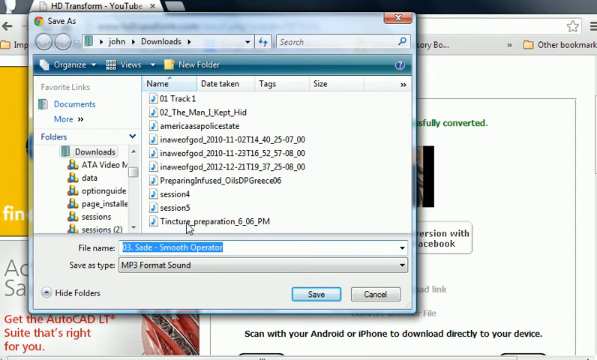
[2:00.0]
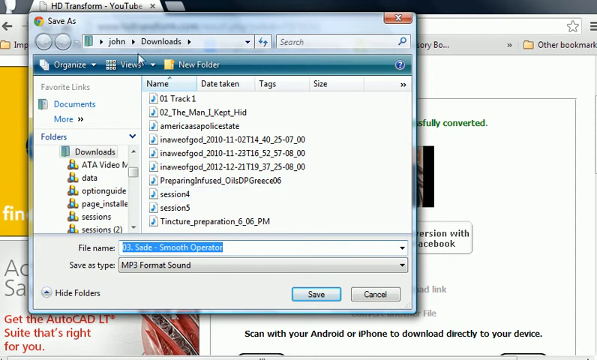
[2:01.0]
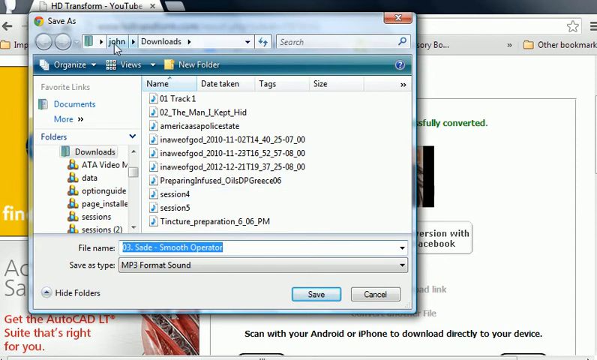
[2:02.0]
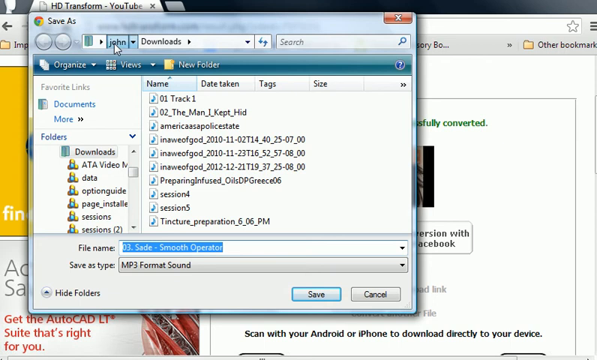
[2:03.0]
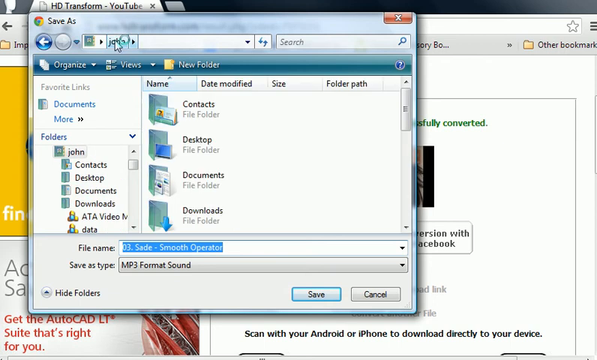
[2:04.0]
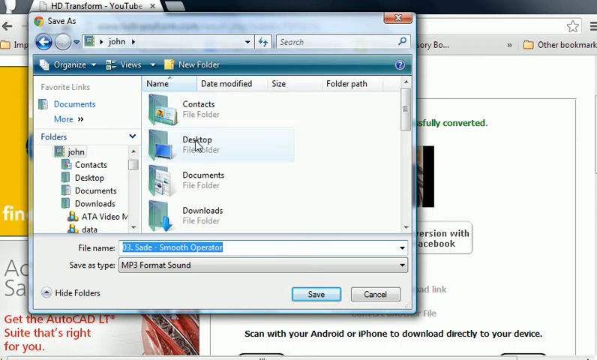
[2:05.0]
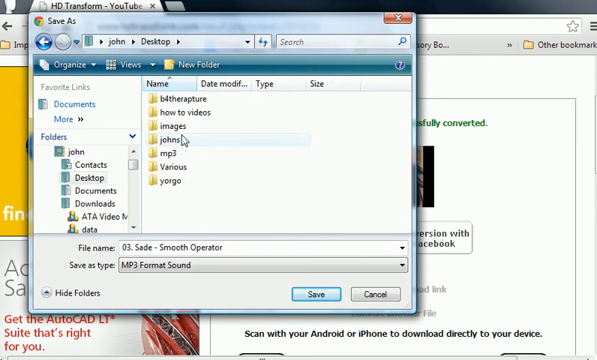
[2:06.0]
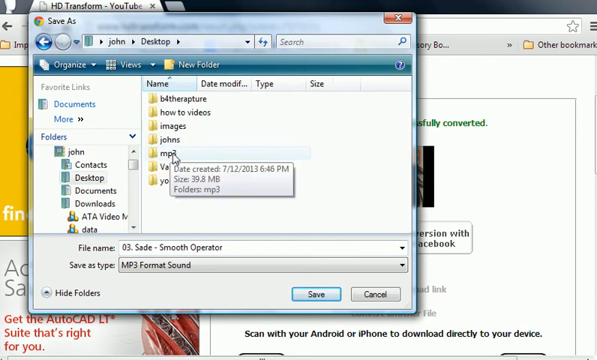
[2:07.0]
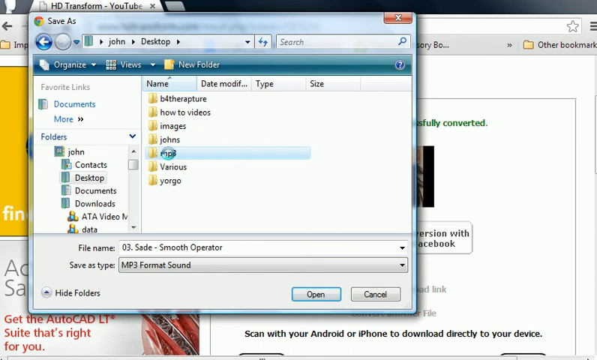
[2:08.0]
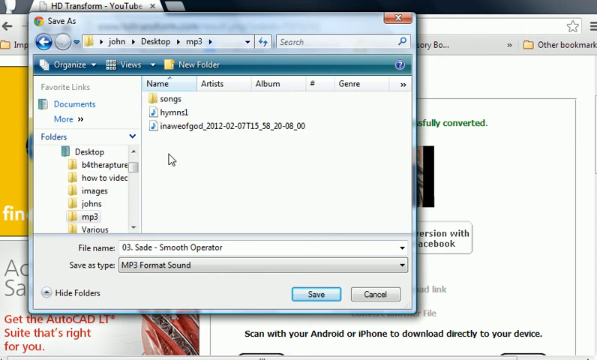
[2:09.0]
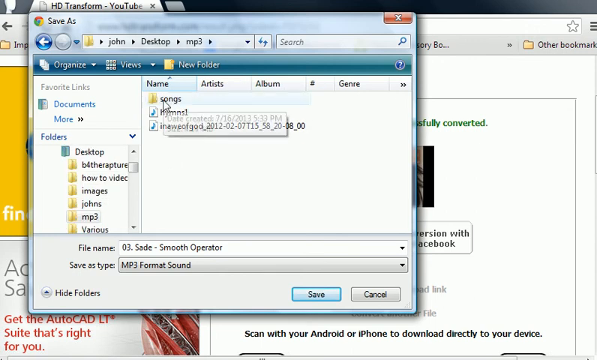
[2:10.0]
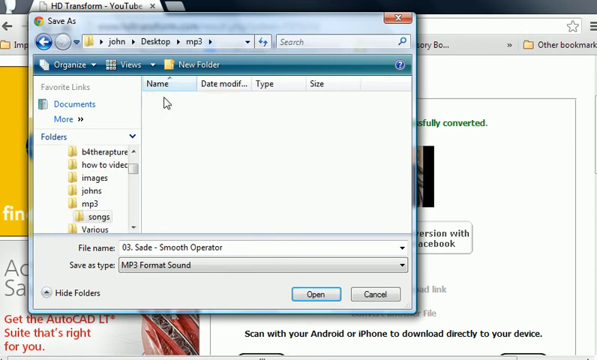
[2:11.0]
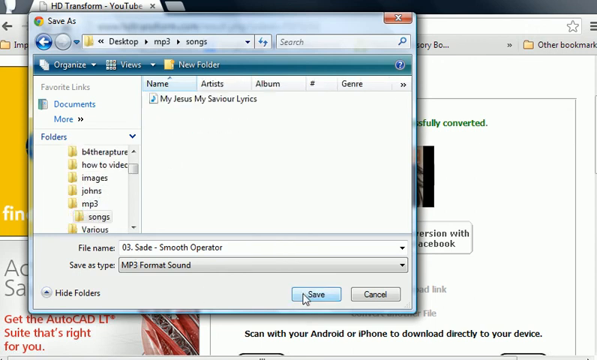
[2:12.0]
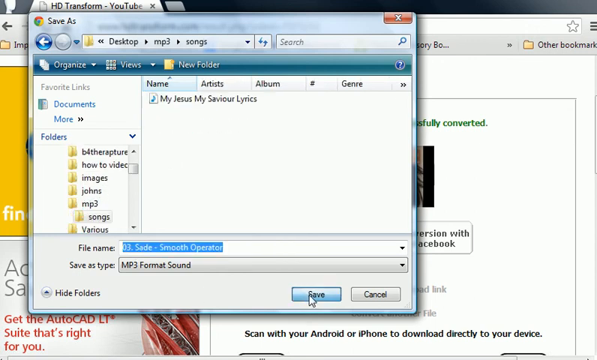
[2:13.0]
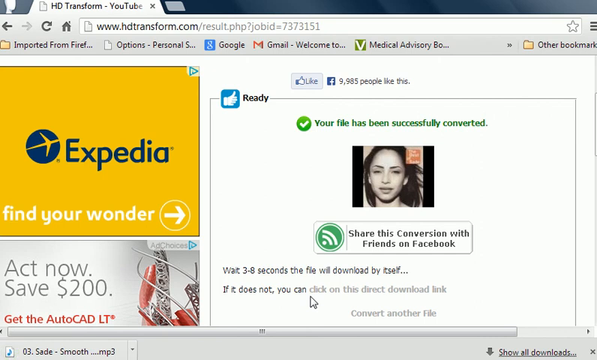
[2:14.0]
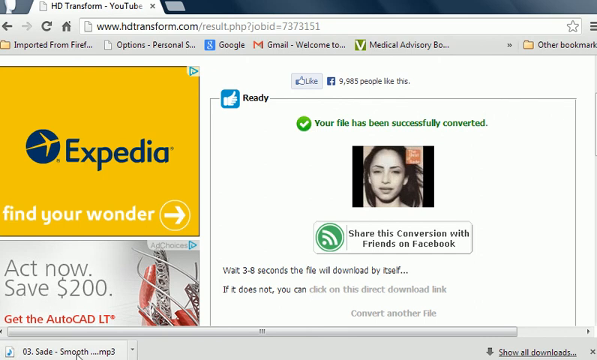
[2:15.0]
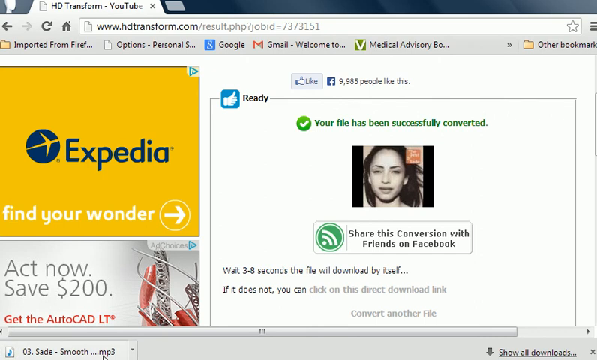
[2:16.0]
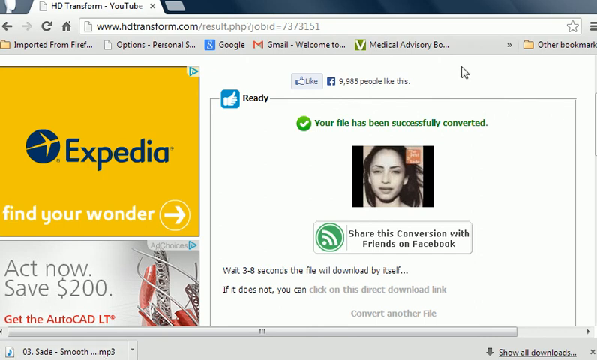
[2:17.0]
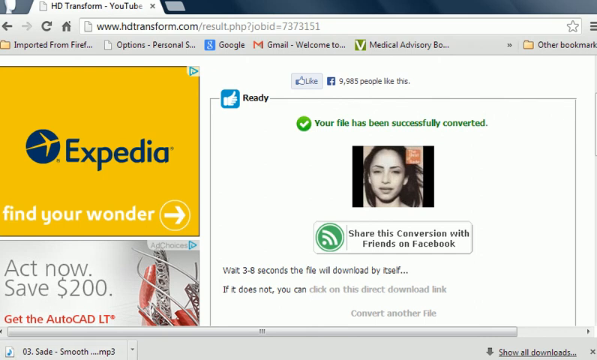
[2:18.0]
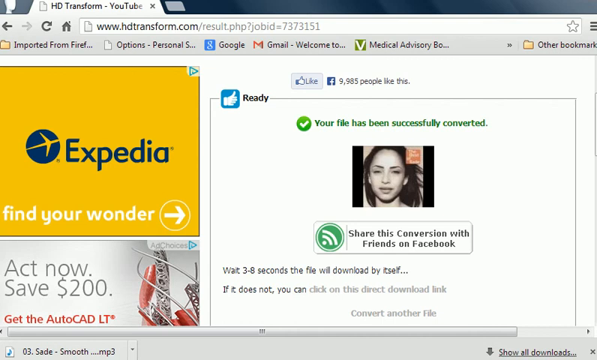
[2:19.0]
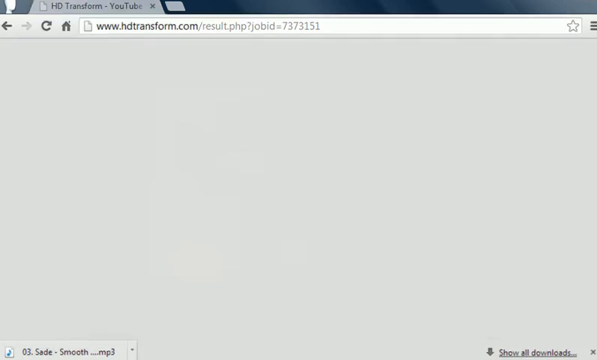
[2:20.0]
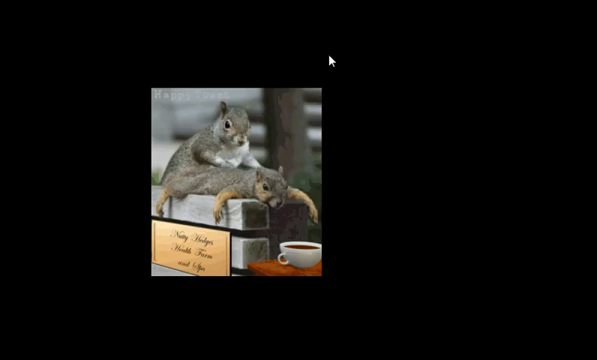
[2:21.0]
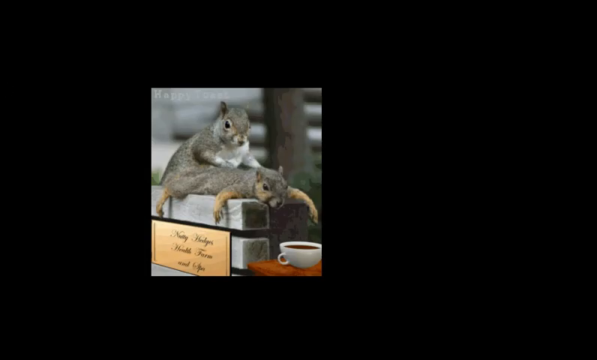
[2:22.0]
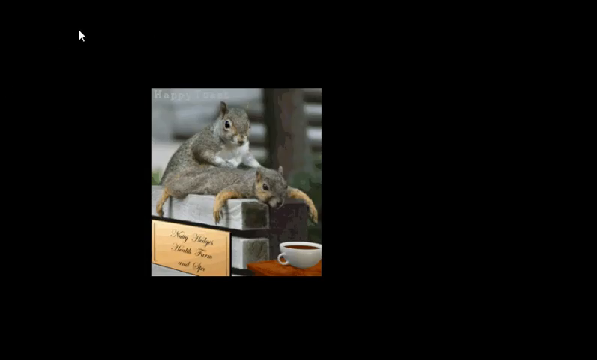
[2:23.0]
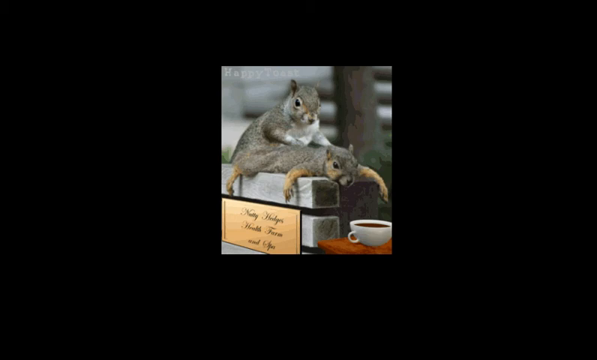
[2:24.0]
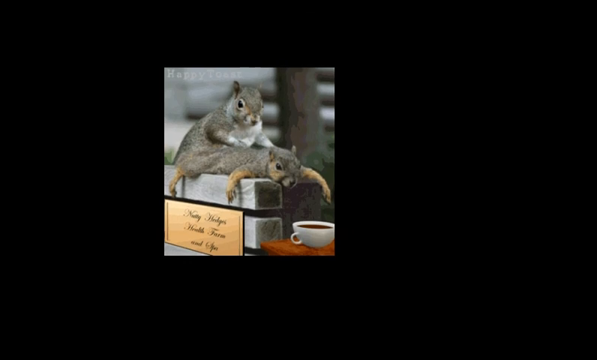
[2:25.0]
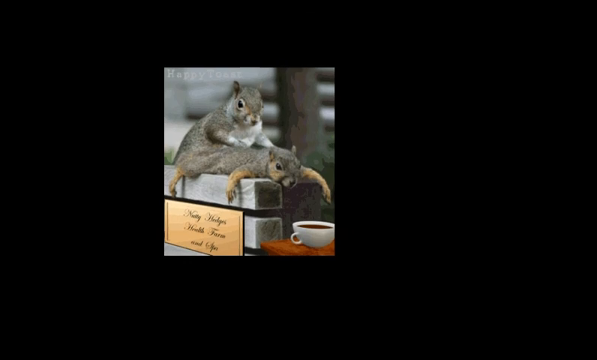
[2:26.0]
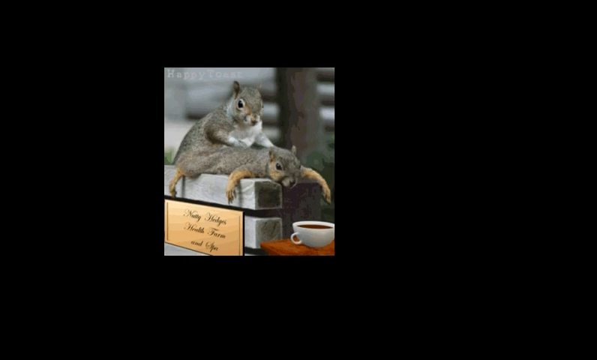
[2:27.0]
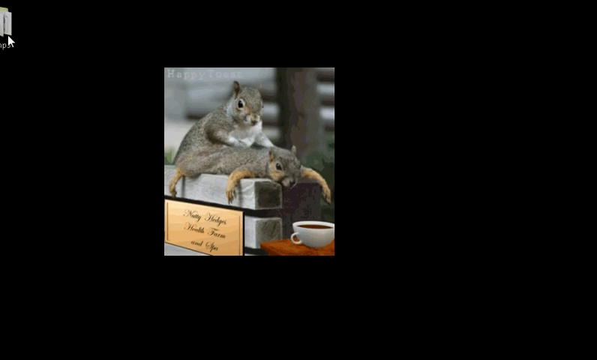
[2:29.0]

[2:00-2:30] A Save As dialog box is shown, with the file name text, 03. Sade - Smooth Operator, highlighted in blue in the File Name input box. The white mouse cursor selects the text "John" at the top left of the dialog, then clicks the Desktop file folder, then the folder MP3, then the folder Songs. Inside the Songs folder is a file called My Jesus, My Savior Lyrics. The Save As Type option selected is MP3 format sound, and the Save button at the bottom right of the dialog is clicked. The dialog closes, and the HDTransform website is shown again, with two ads on the left, one for Expedia and one apparently for some type of jewelry. The mouse moves to the top right of the screen. The background goes black, and a photo of two squirrels and a coffee cup appears.